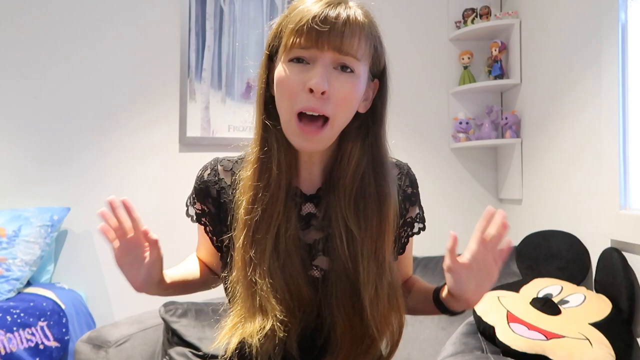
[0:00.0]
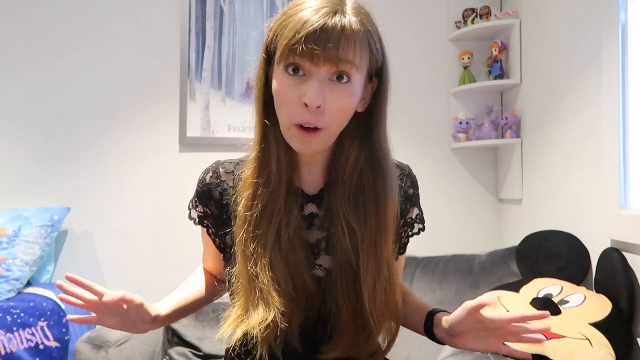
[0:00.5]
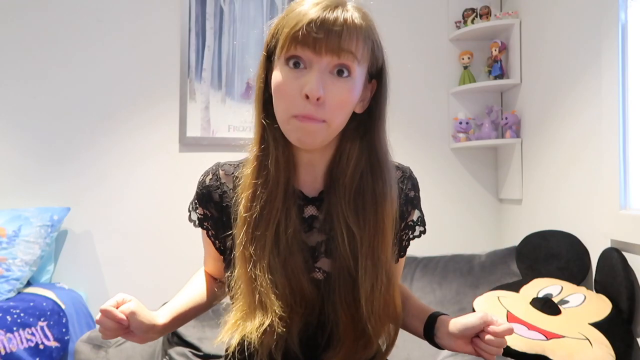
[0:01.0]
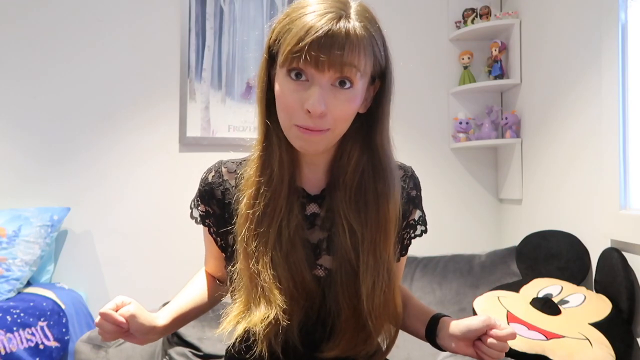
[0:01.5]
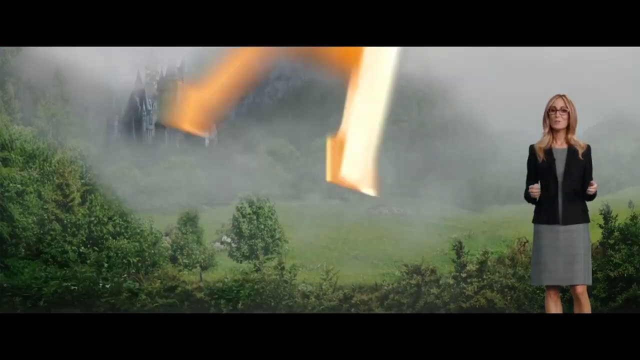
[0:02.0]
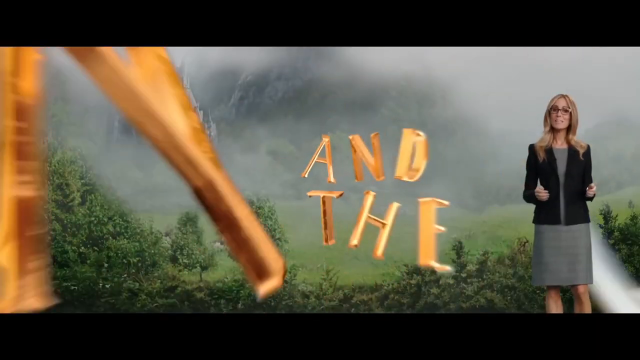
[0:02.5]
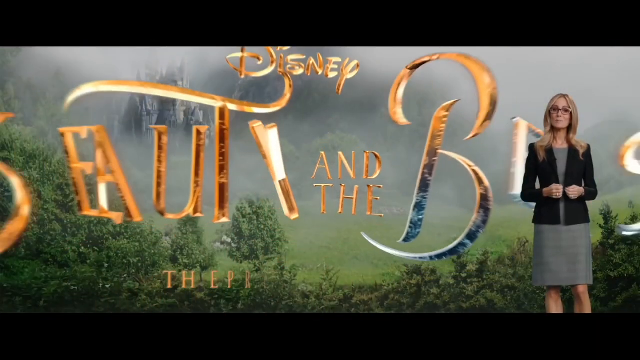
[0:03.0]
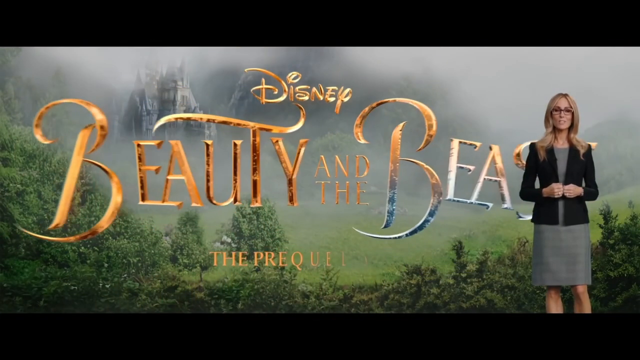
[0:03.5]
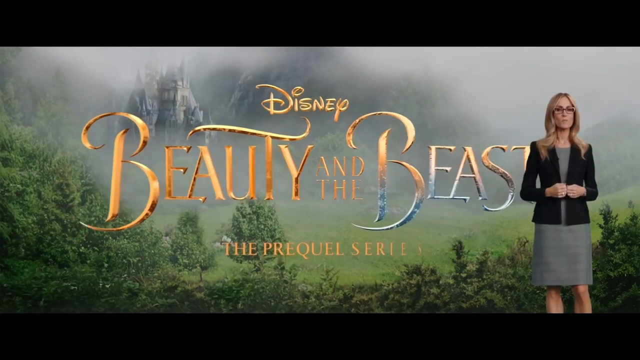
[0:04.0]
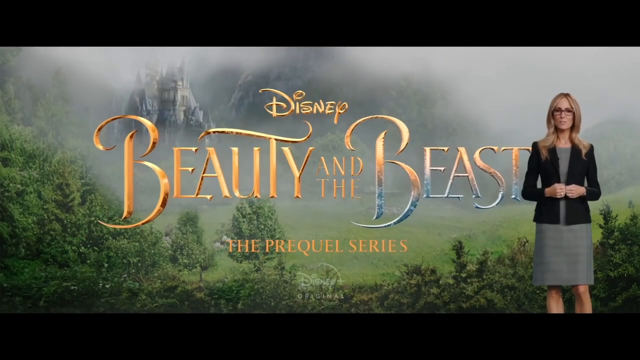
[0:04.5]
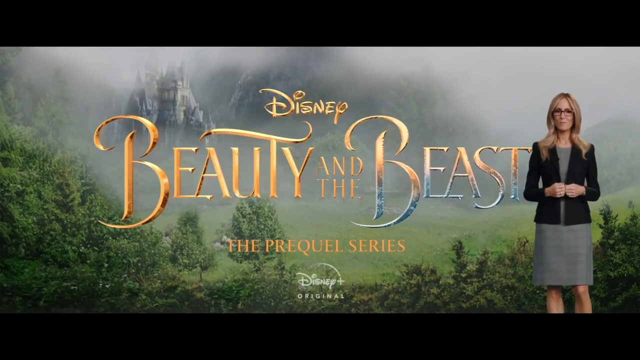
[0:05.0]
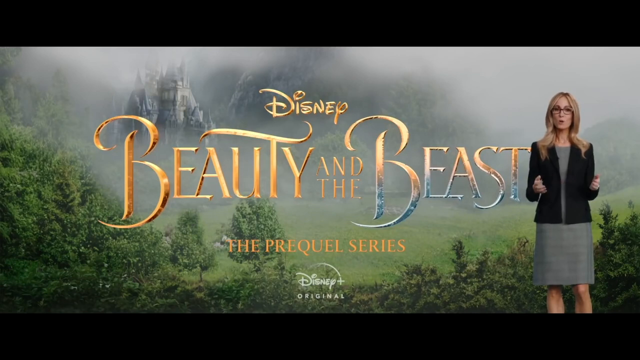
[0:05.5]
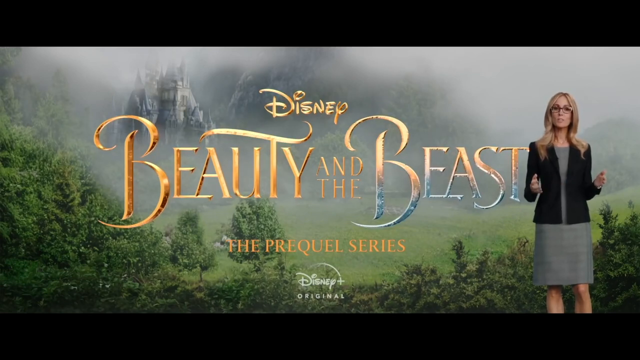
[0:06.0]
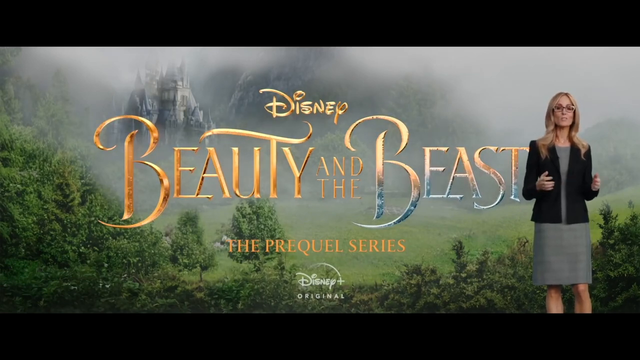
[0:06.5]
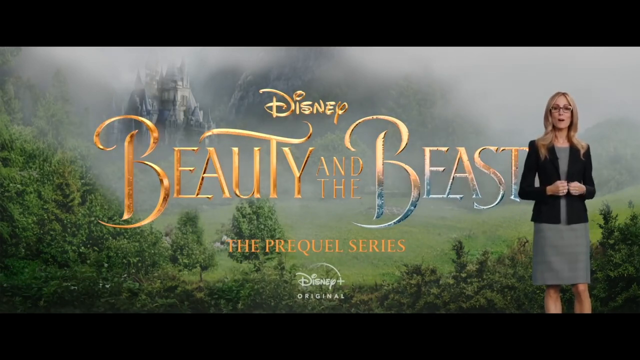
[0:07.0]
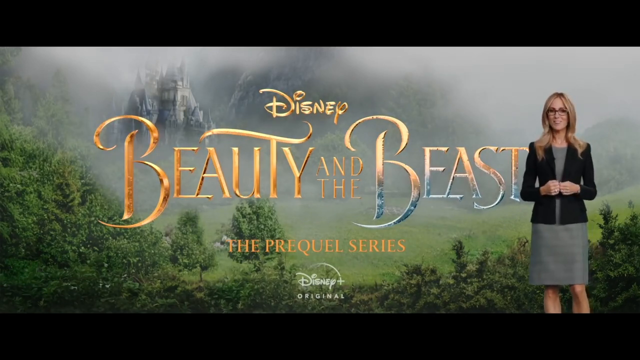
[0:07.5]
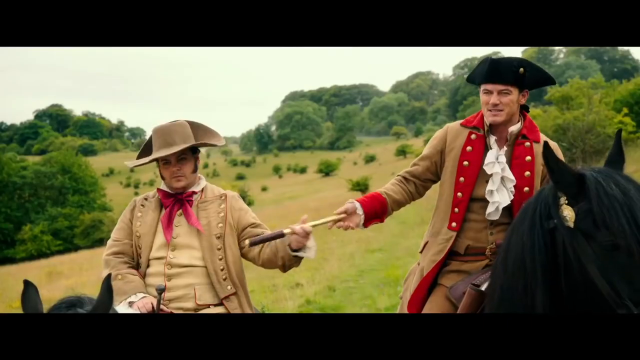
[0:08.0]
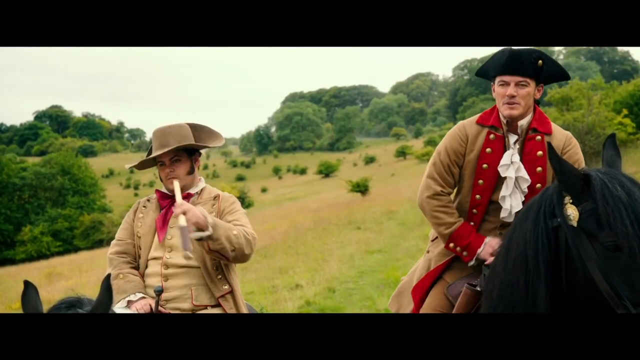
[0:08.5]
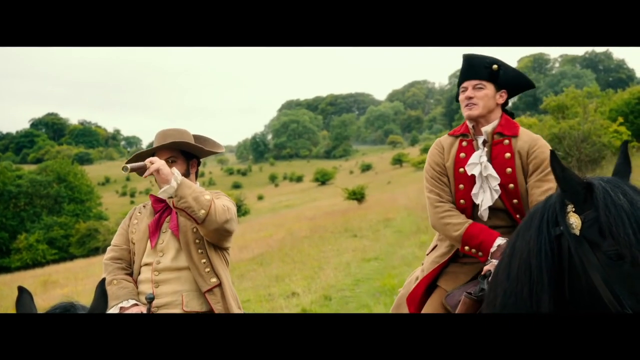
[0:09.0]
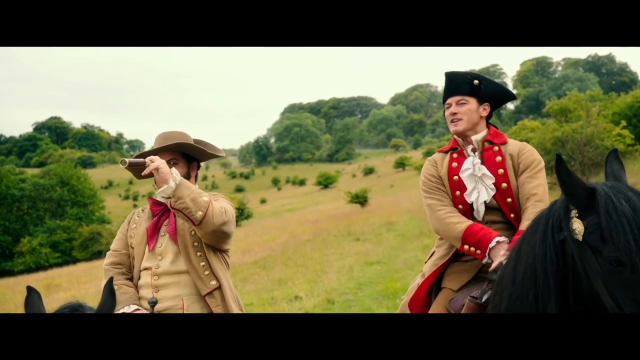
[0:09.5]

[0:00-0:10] A lady is sitting and talking. She wears a grey dress, a black jacket and spectacles, and has long hair. Behind her is the text "Disney Beauty and the Beast, the prequel series," followed by "Disney." Two pirate men in red and khaki outfits look through binoculars, apparently checking where they are going. They are on top of animals that seem to be donkeys. A girl is shown in a room with a Mickey Mouse plush, a bed with a Disney comforter, and a mirror. The cover near the Mickey Mouse plush has a purple and white edge.